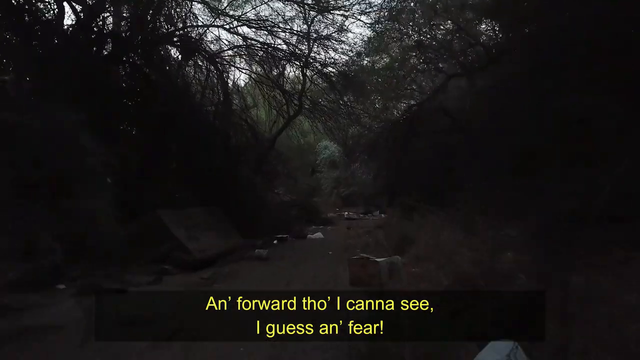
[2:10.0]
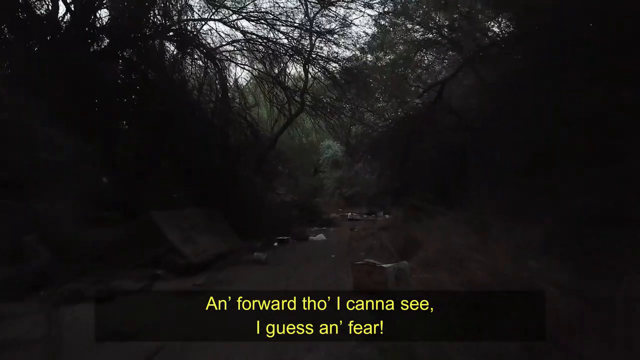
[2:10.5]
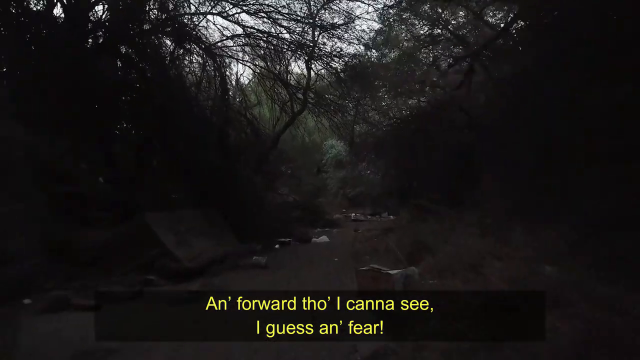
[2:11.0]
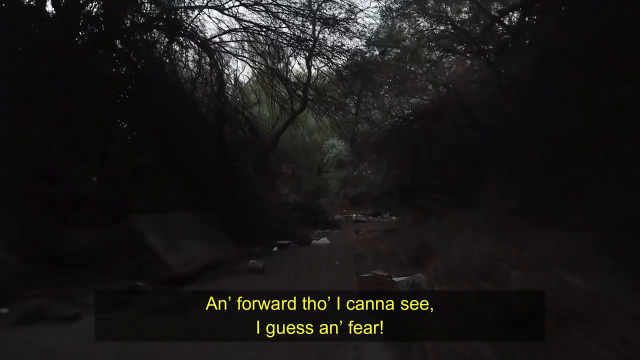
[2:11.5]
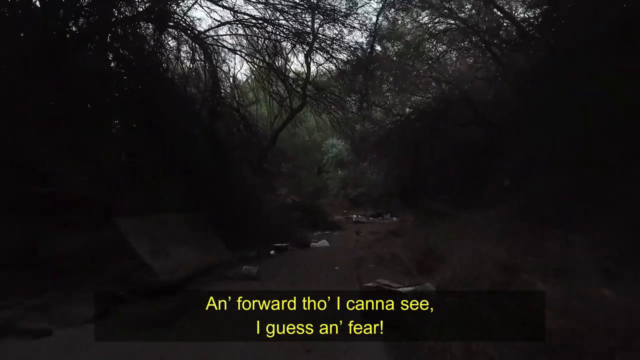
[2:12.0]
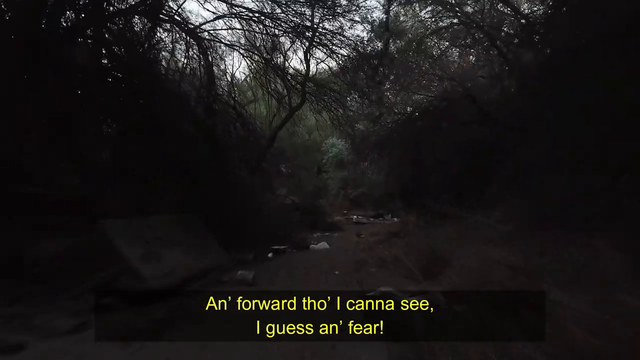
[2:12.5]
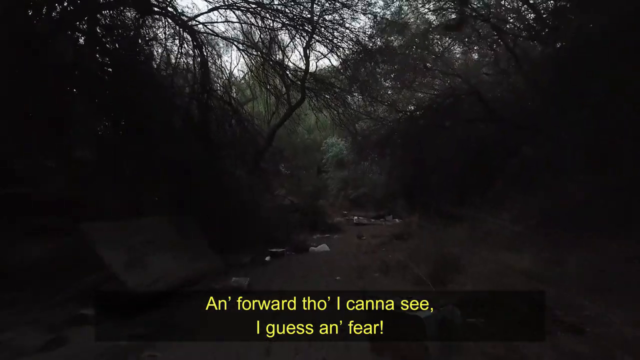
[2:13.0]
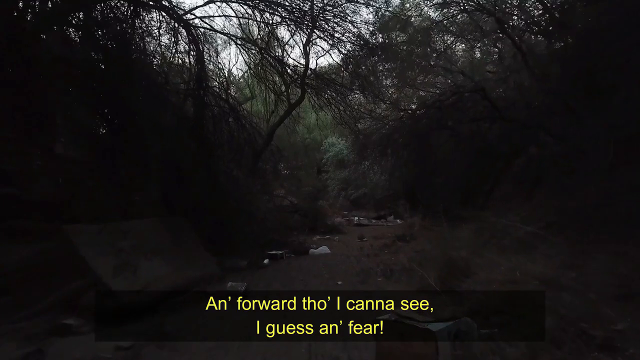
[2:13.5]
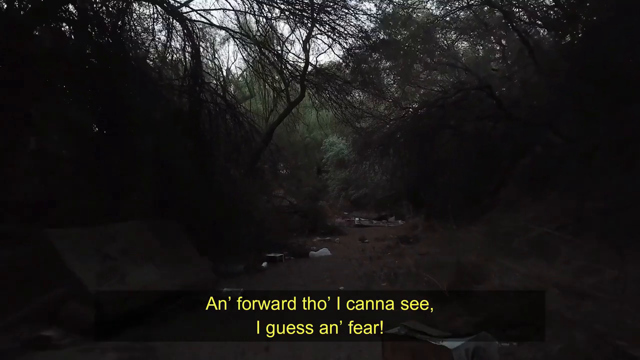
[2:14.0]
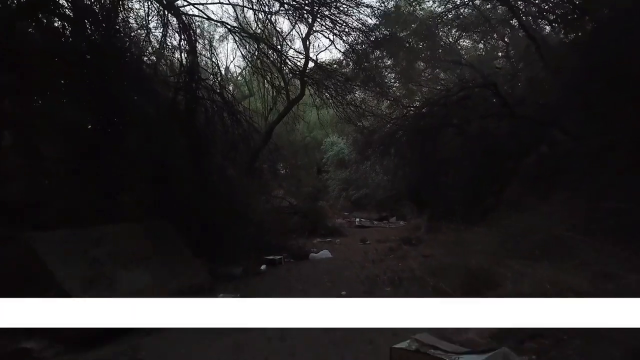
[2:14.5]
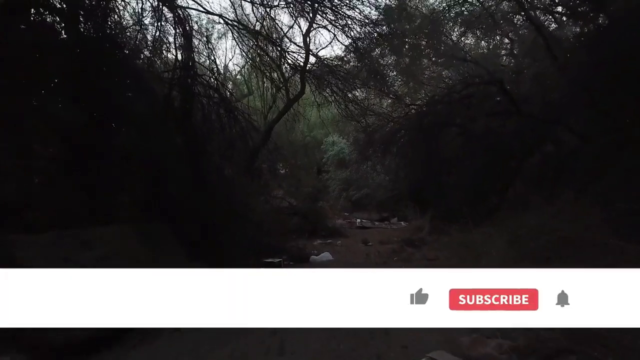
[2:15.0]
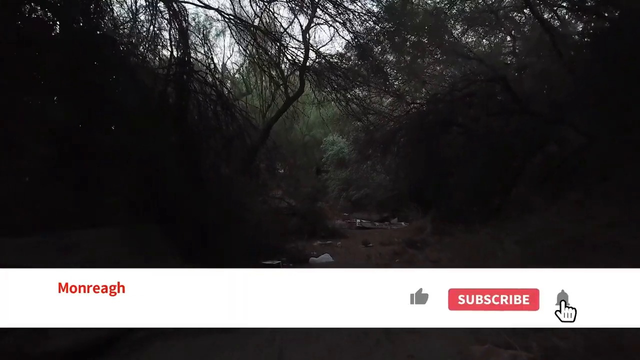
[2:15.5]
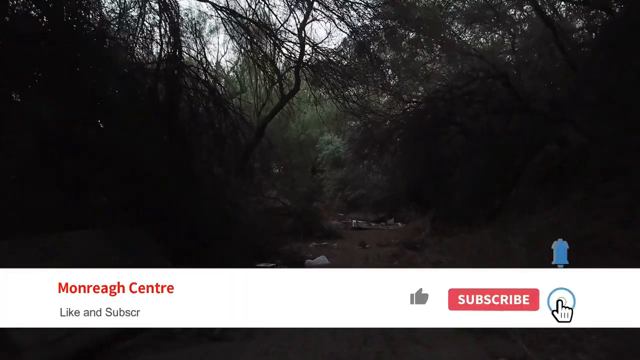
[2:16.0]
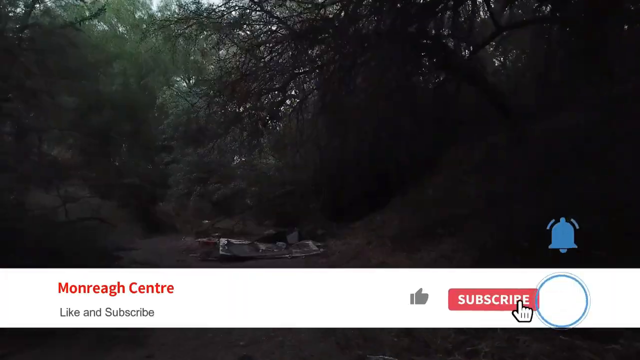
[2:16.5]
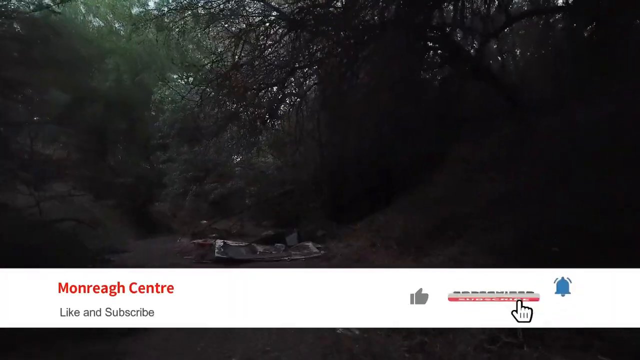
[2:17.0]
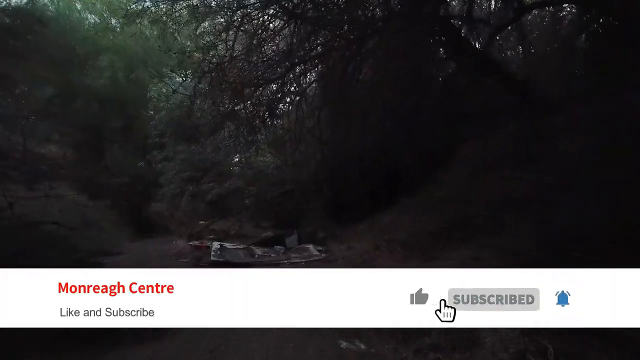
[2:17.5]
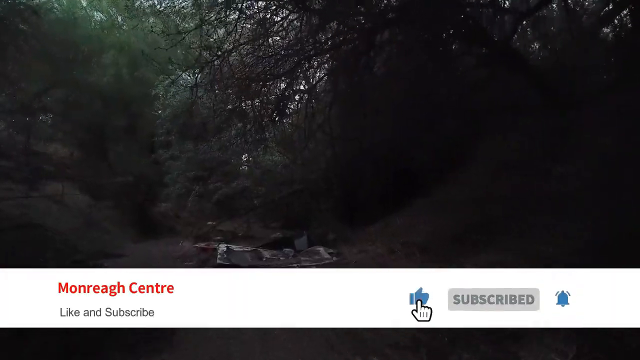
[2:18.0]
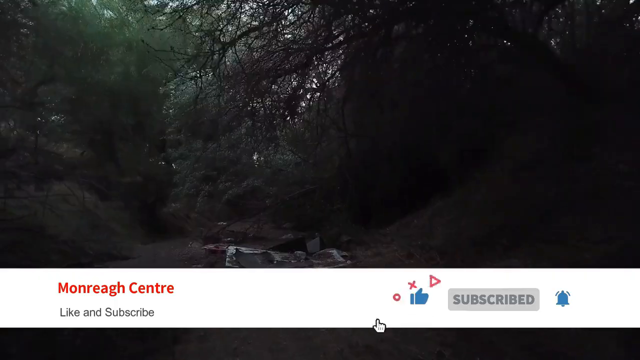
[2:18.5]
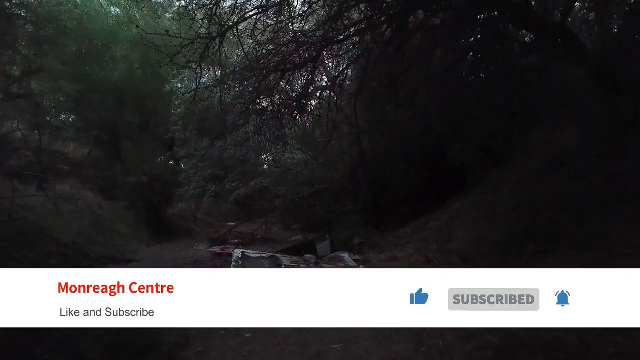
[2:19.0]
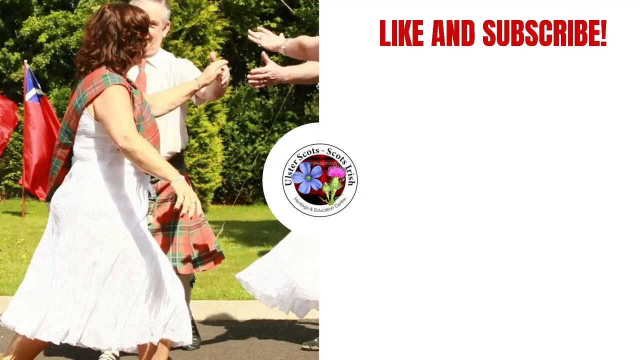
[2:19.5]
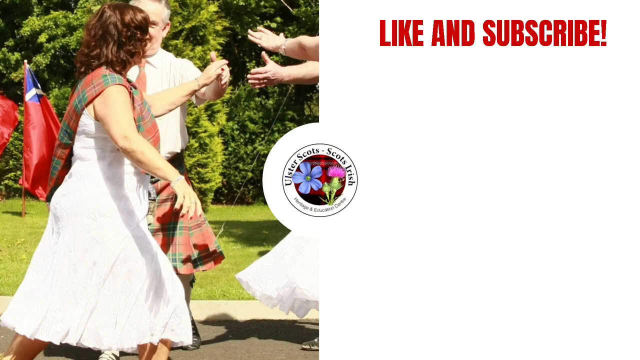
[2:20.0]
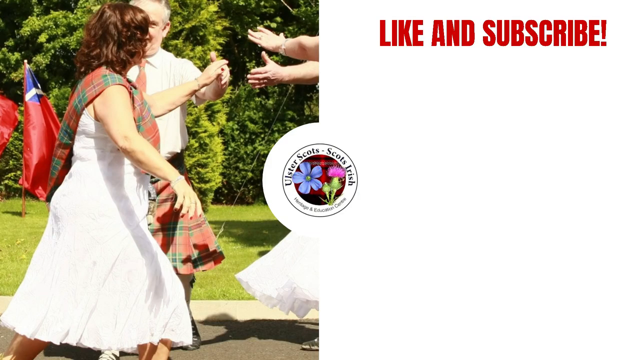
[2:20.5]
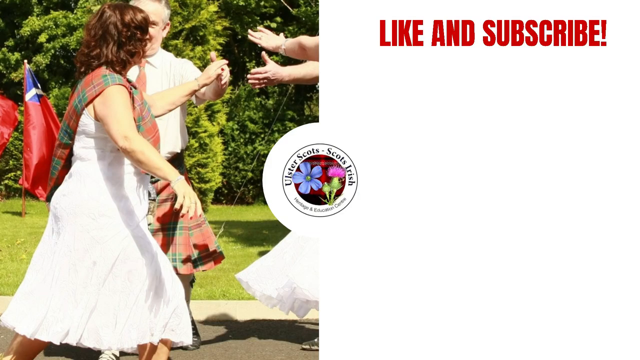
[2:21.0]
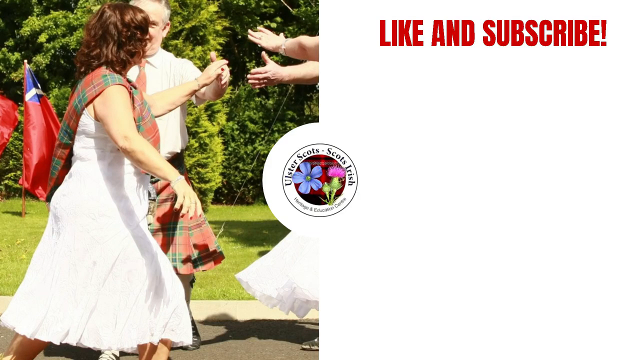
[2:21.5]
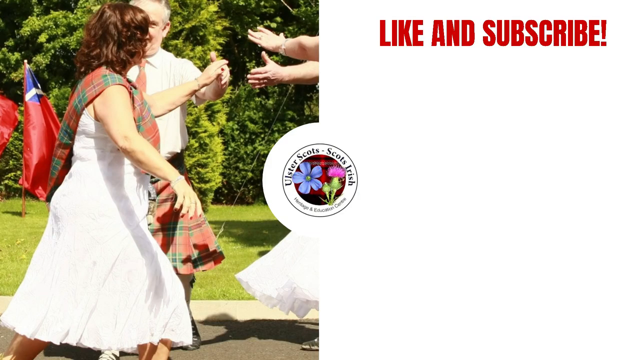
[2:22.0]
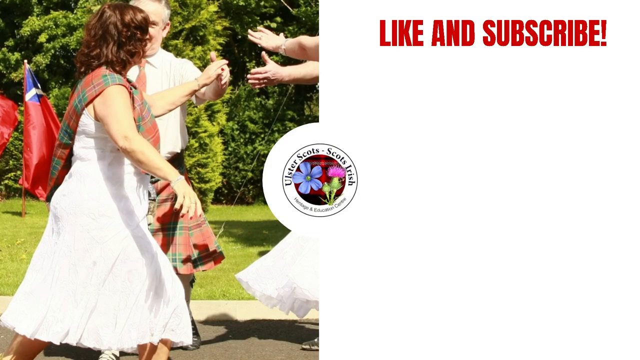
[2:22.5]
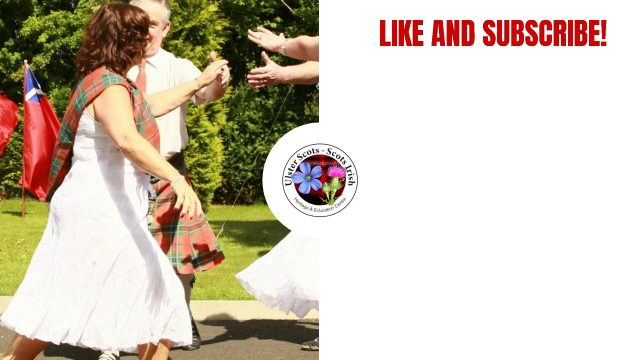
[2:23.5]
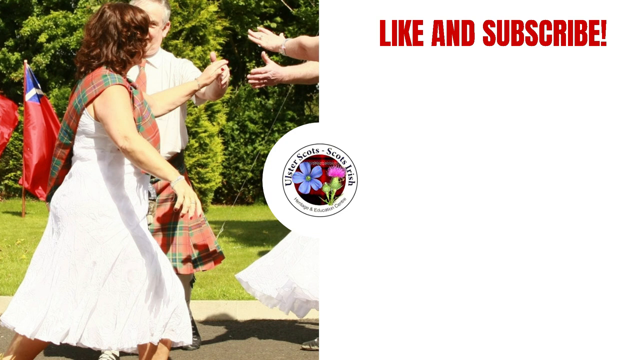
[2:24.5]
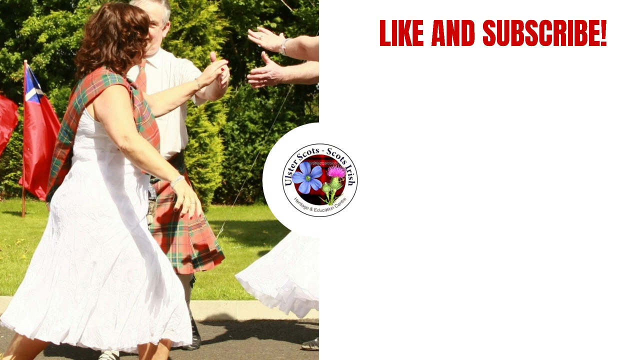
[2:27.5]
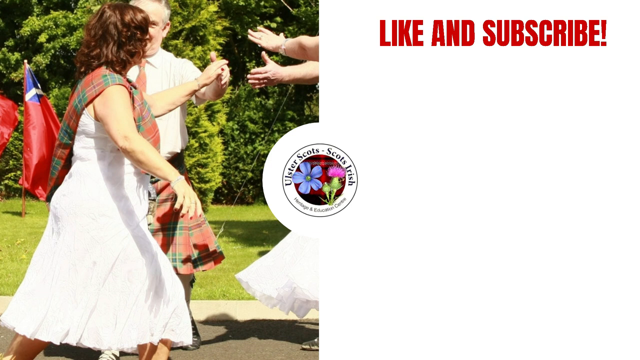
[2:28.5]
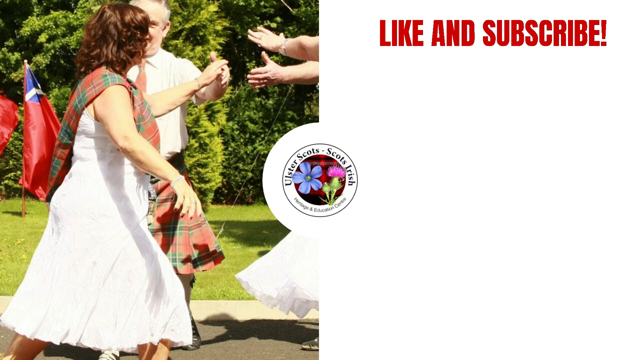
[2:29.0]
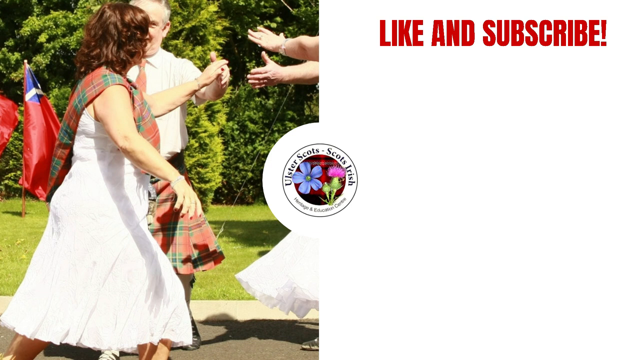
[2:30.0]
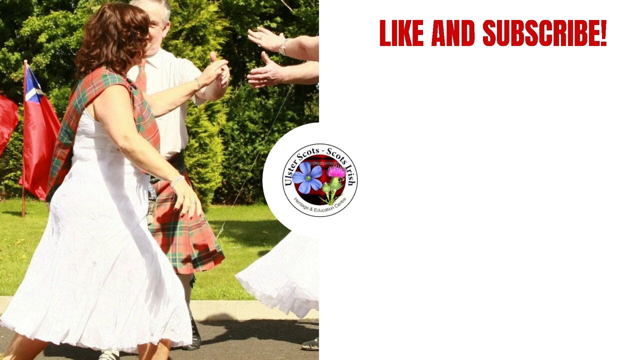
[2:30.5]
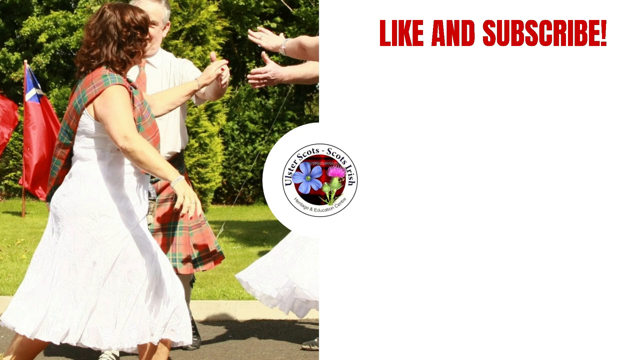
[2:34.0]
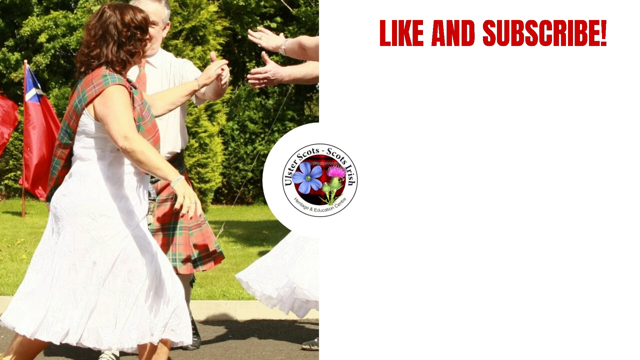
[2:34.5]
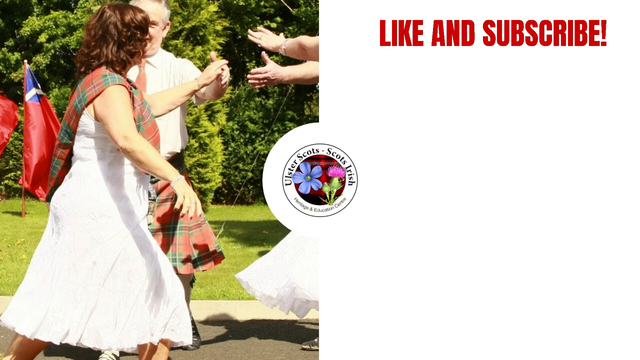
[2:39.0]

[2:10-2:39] The very dark wooded walking path continues, with trees growing over the top so little light comes in, and what looks like garbage all over the path. A white banner comes up from the bottom reading "Monreagh Centre," followed by "like and subscribe," a subscription button and a little blue bell. A little icon moves around and points to subscribe. The image then switches: the right half of the screen is white with "like and subscribe" in red. On the left half is a profile of a woman in a white dress with a piece of red and green tartan over her shoulder. Behind her, a man holds her hand; it looks like they were maybe dancing, as some other hands come in from the side of the screen. The man wears a white button-up shirt, a red tie and a kilt in the same red and green tartan. In the center of the screen are some flowers, including a thistle, and text reading "Ulster Scots, Scots-Irish," with blurry text below that maybe mentions heritage and education. The dancing people appear to be standing on grass, with trees in the background.